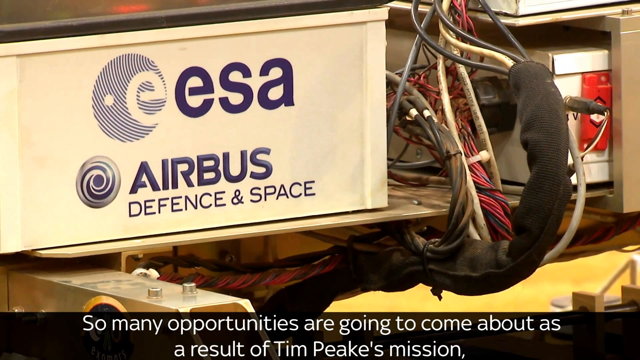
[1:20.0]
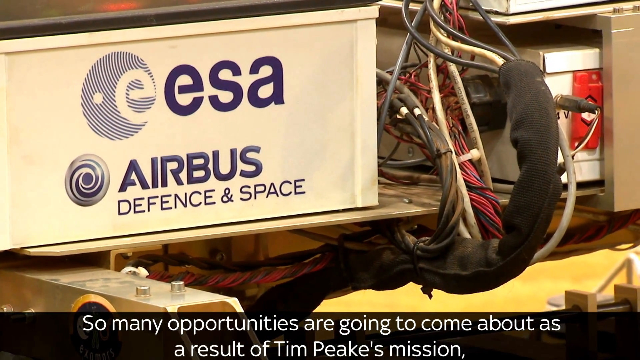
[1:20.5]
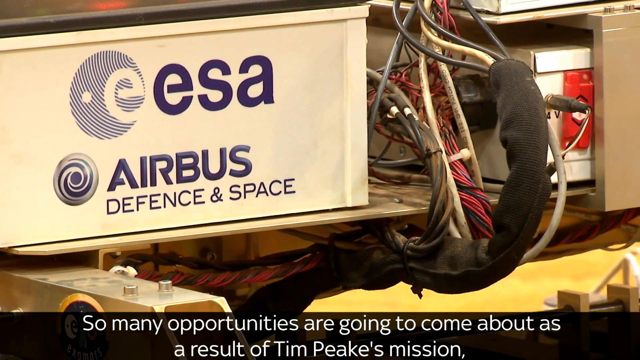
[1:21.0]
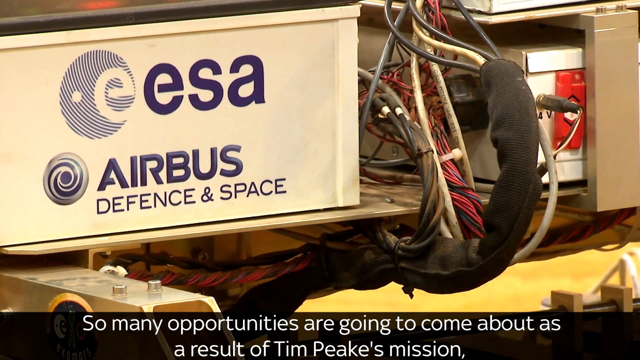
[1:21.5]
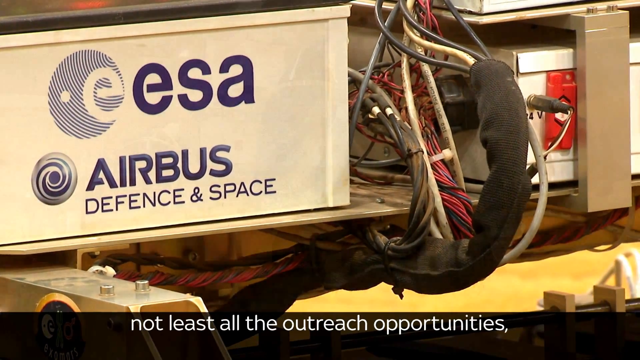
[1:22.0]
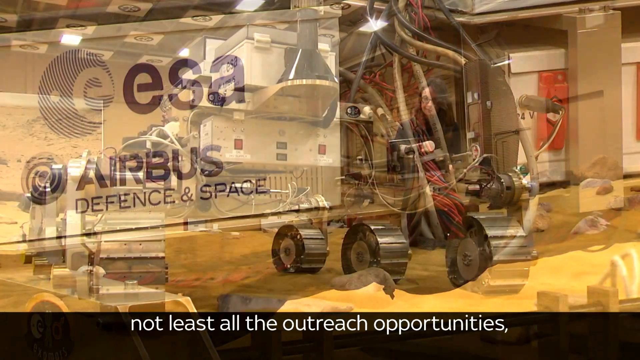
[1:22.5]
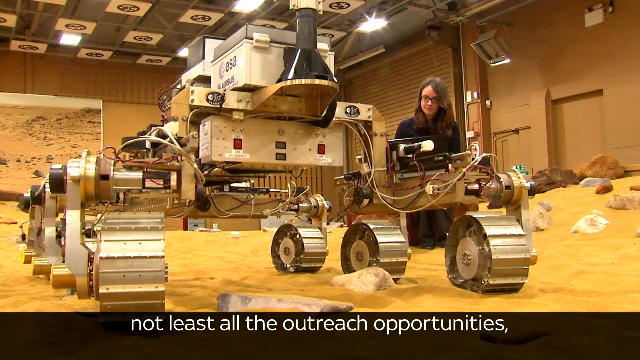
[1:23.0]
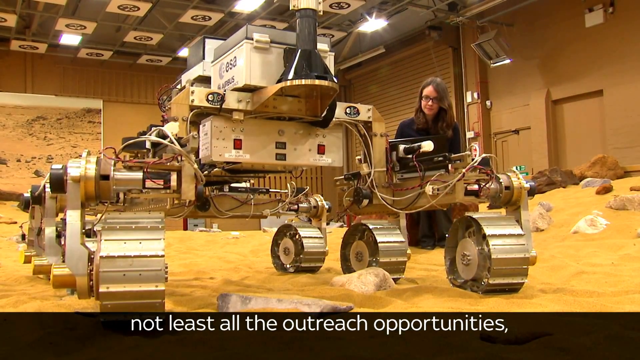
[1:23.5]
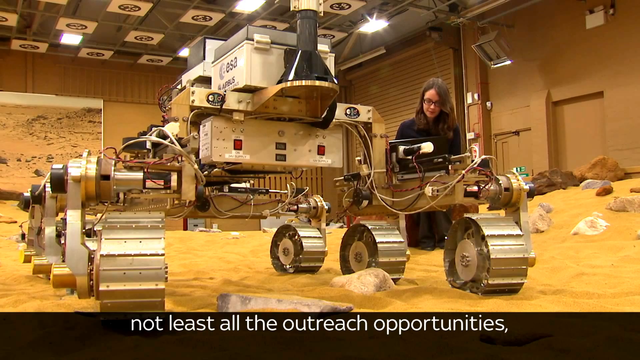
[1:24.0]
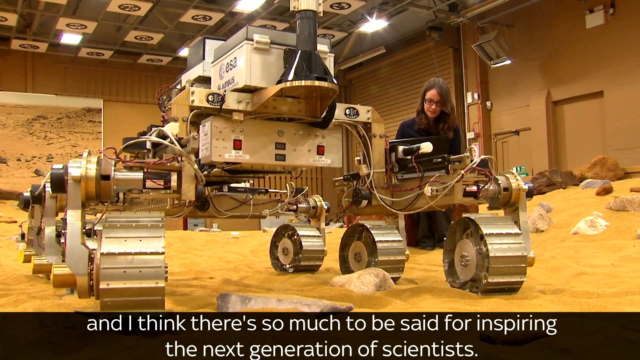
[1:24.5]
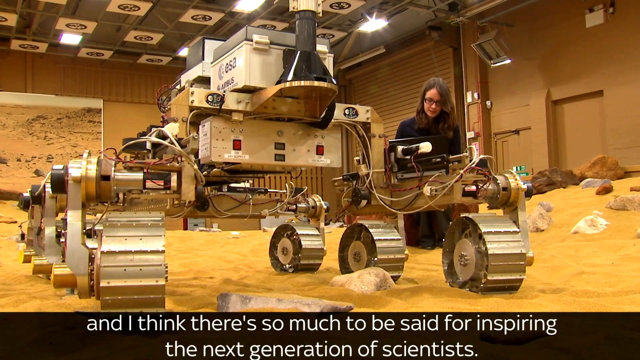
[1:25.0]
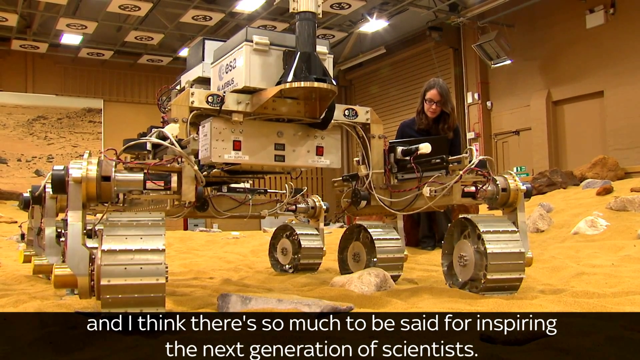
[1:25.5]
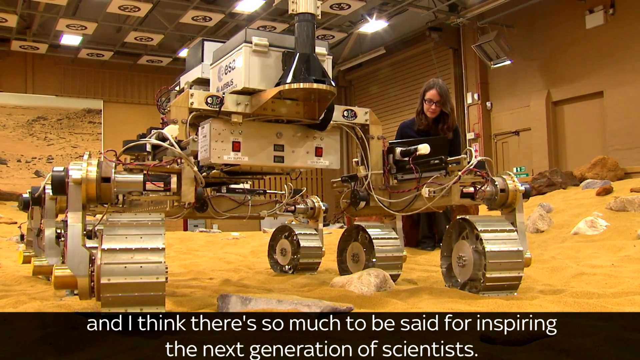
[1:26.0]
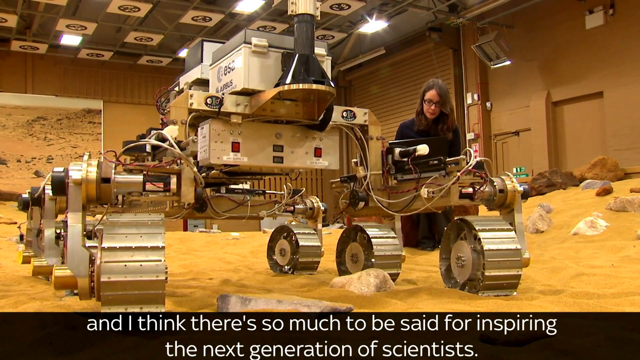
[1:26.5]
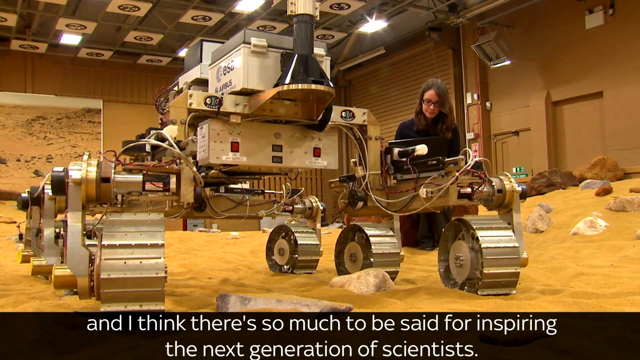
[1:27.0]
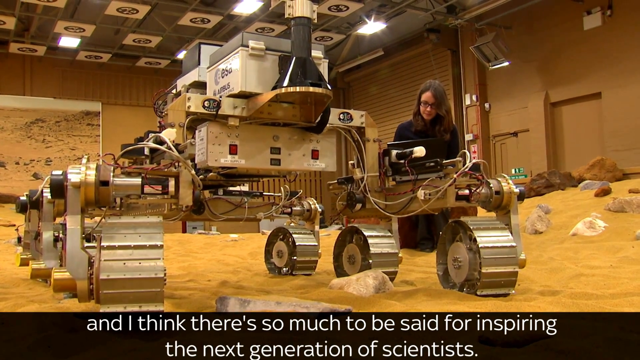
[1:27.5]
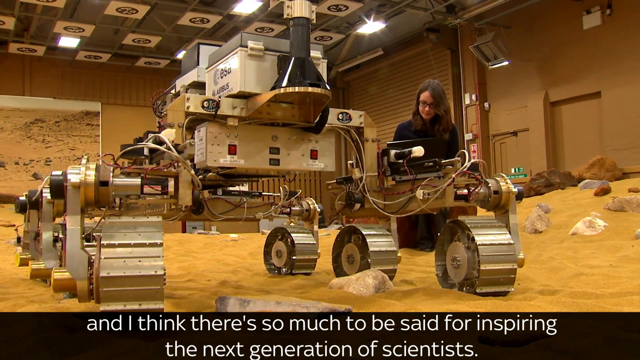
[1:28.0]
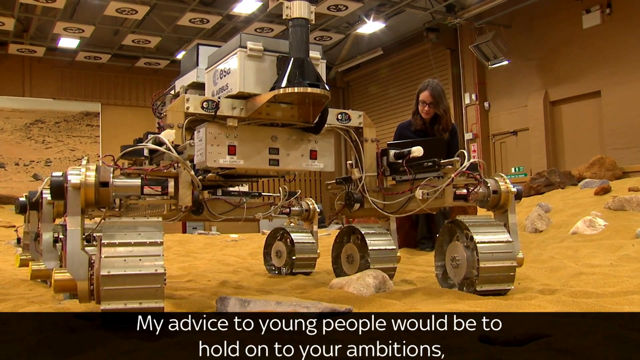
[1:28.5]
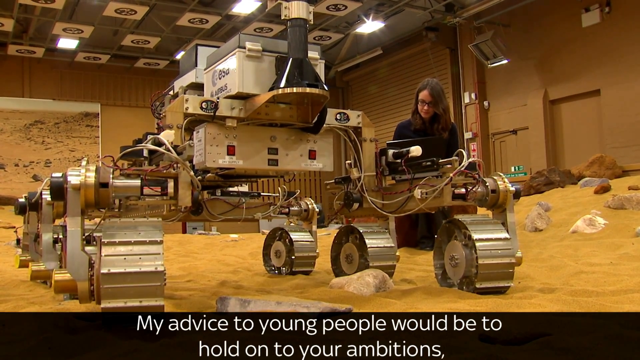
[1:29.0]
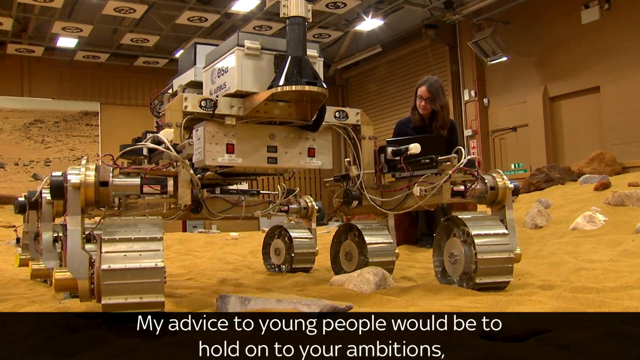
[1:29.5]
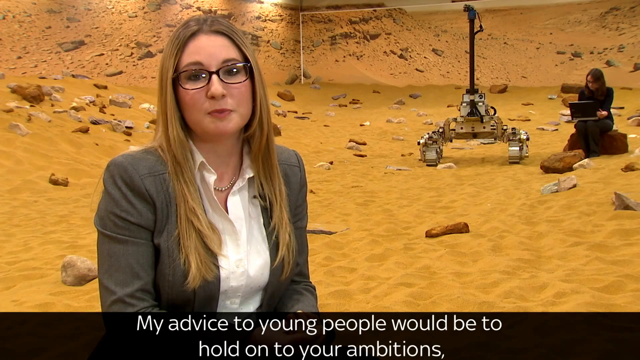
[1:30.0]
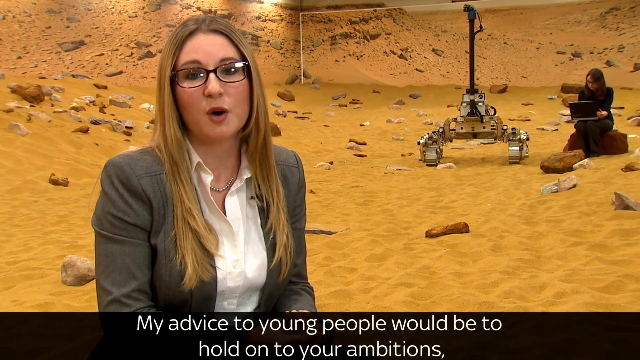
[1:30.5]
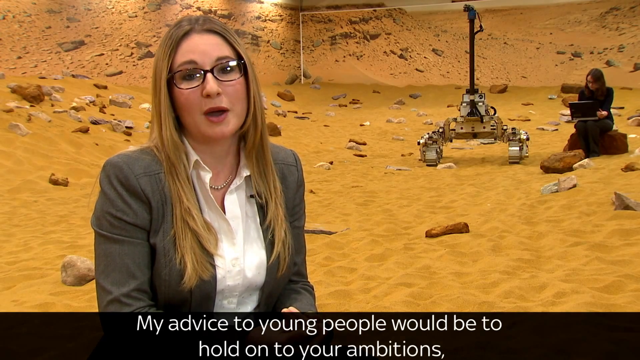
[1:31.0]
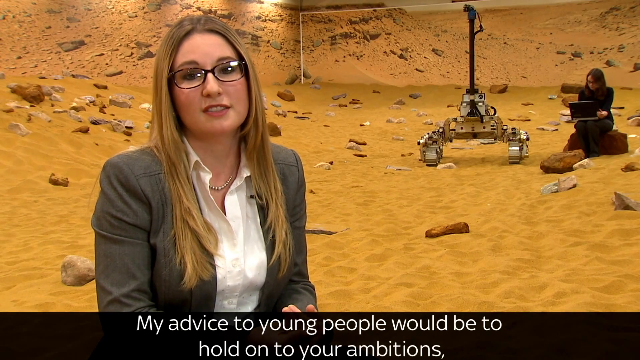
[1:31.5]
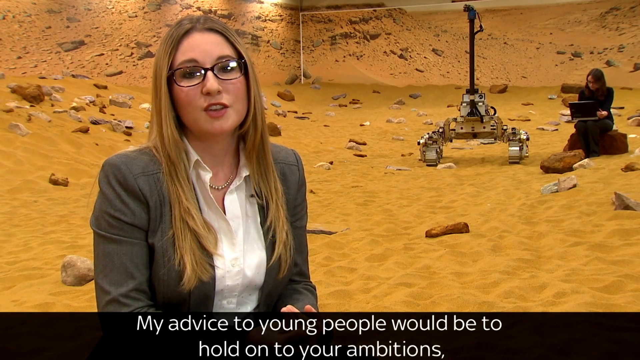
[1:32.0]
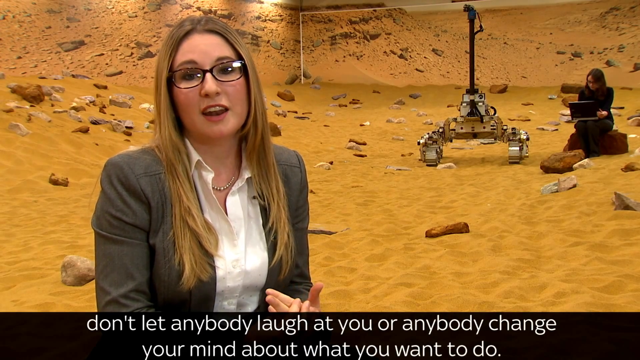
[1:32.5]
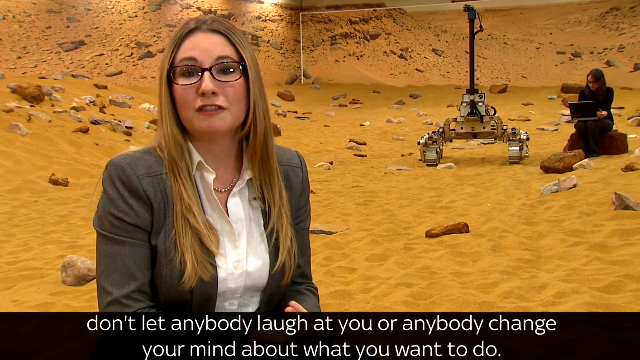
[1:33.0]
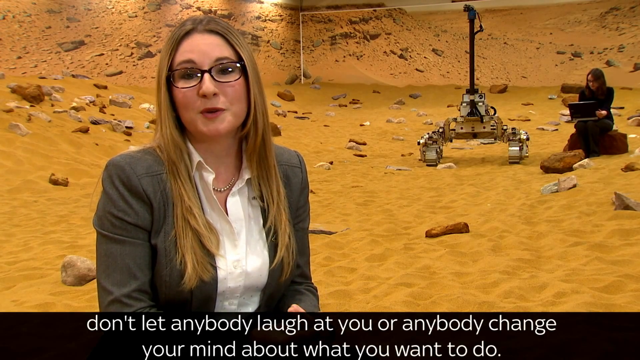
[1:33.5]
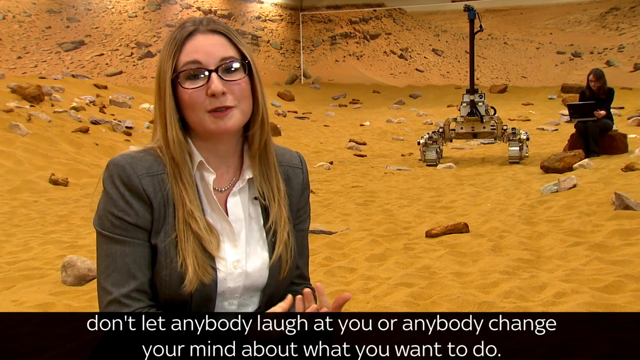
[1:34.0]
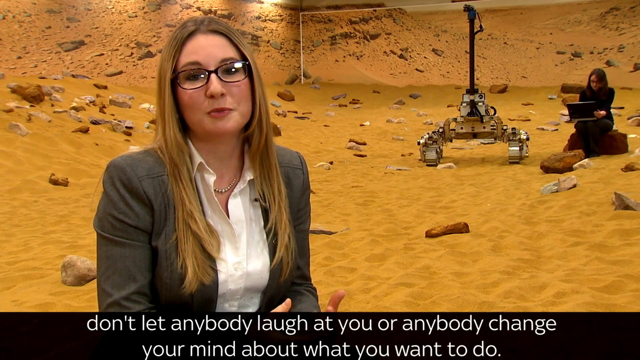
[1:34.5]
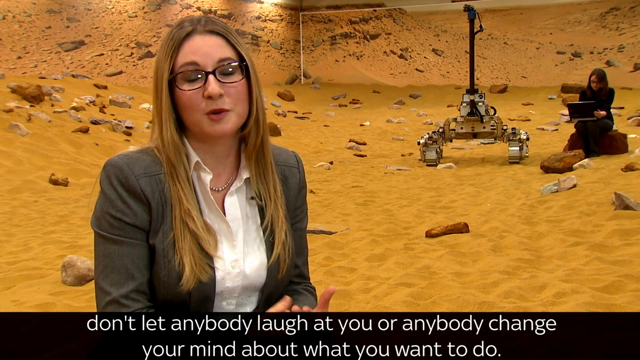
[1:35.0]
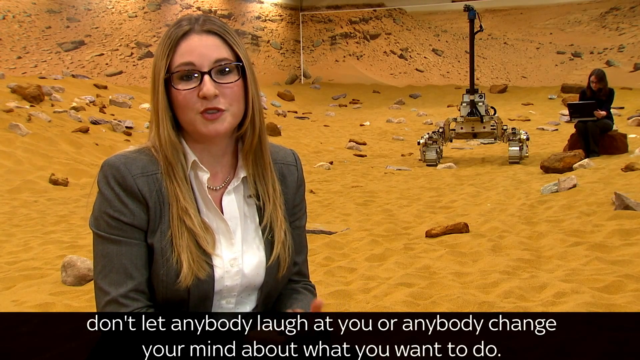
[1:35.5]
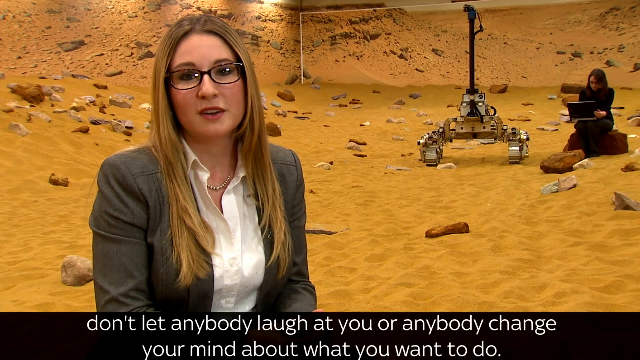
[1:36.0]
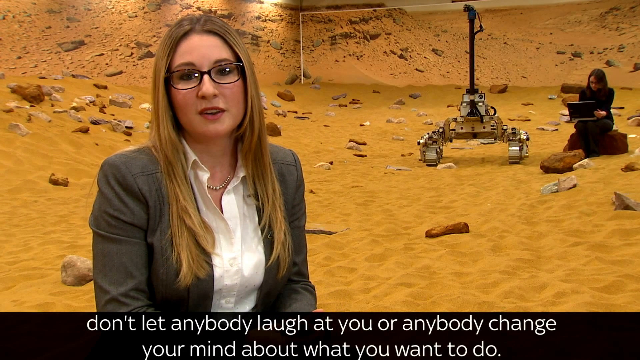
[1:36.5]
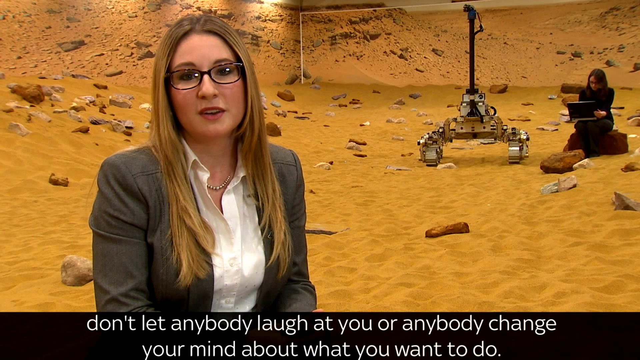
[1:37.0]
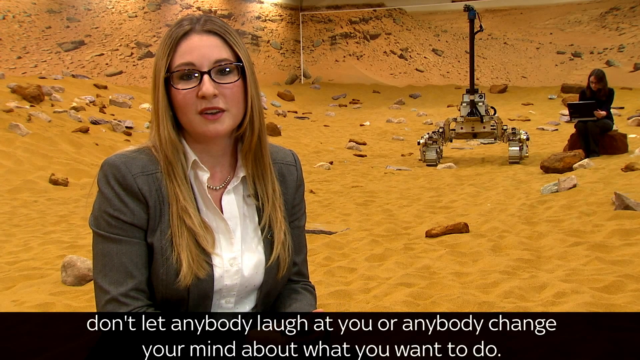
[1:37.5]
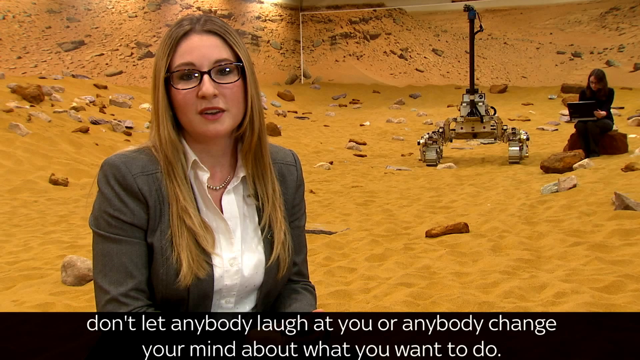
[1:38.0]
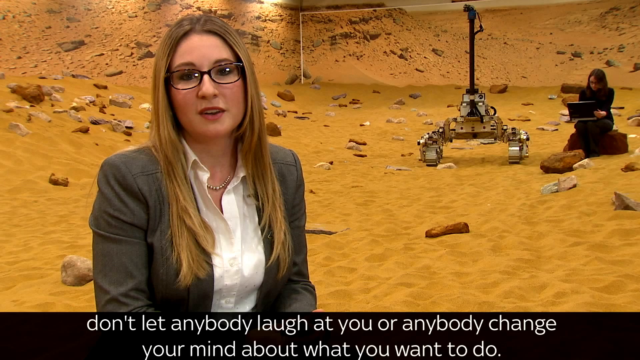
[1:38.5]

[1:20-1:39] The close-up of the metal computer or device continues. On its left side is a large white rectangular piece with "ESA" in purple letters, and underneath it reads "Airbus defense and space," with a purple and white logo to the left. Red, white and black wires go into the device as the camera pans toward the right. A different angle then shows the woman with dark hair and a dark shirt, now in front of the device looking down at it. The video transitions back to the woman speaking into the camera, who is still talking.